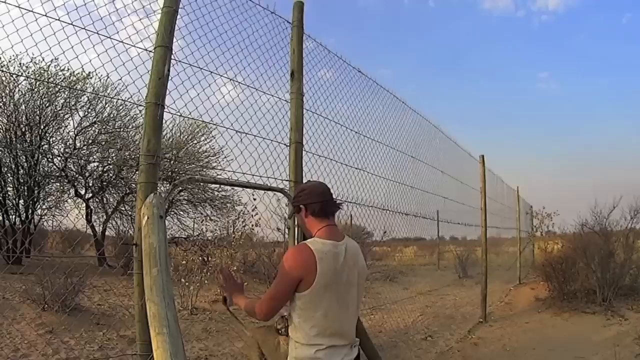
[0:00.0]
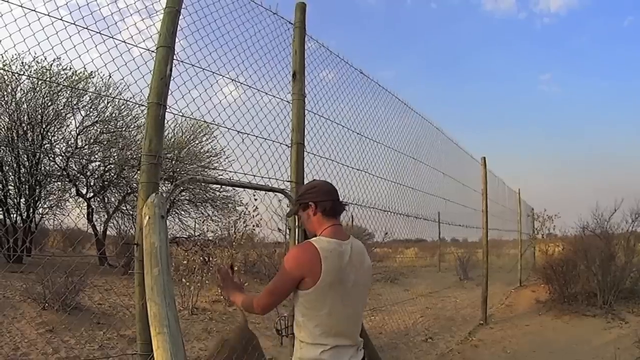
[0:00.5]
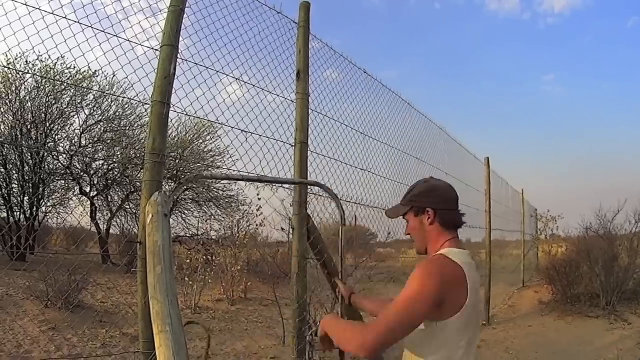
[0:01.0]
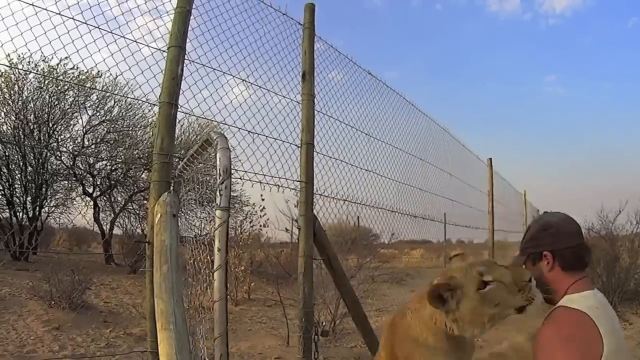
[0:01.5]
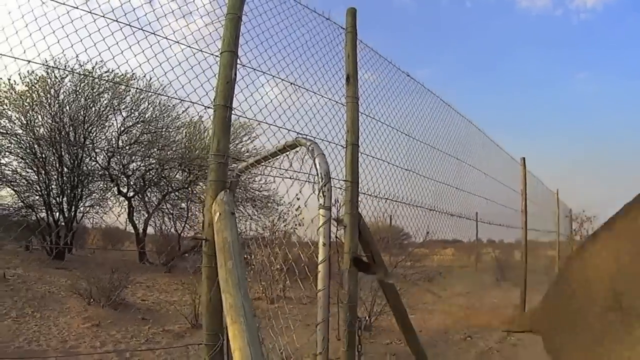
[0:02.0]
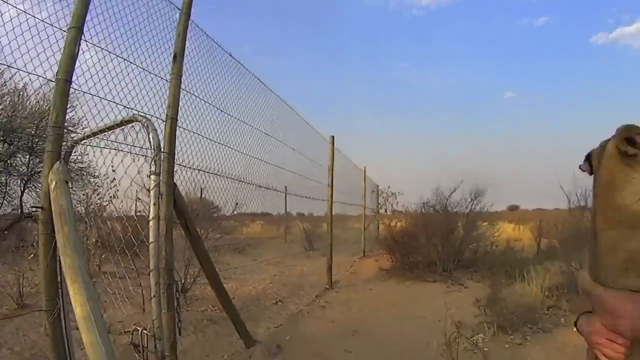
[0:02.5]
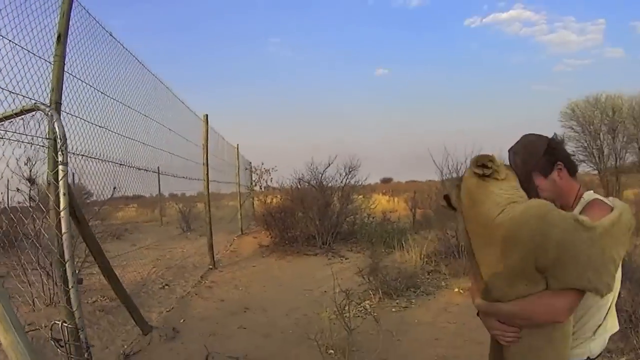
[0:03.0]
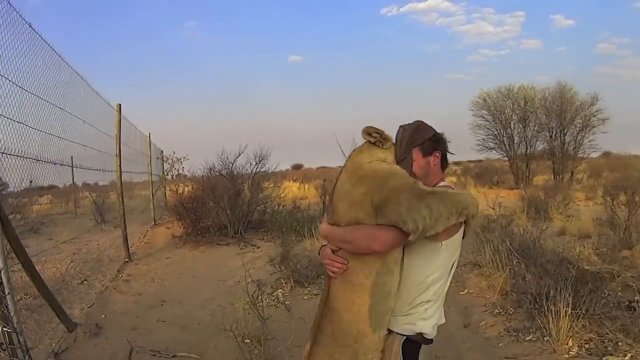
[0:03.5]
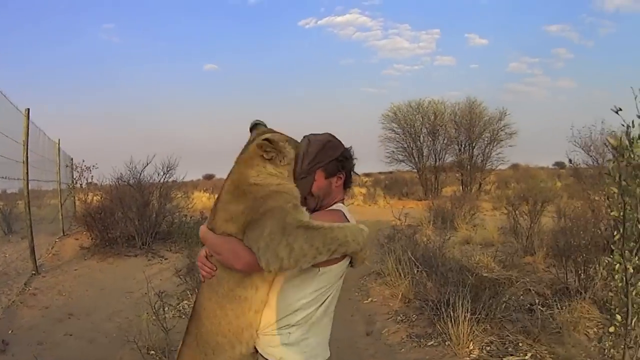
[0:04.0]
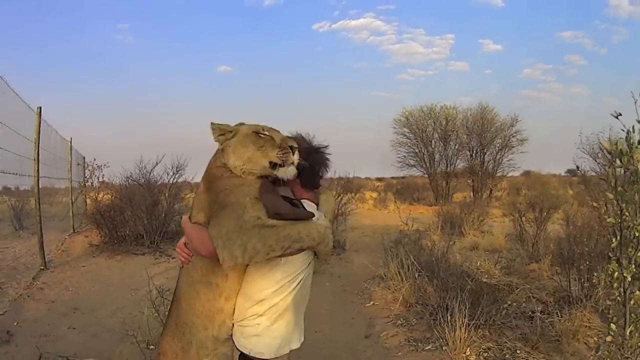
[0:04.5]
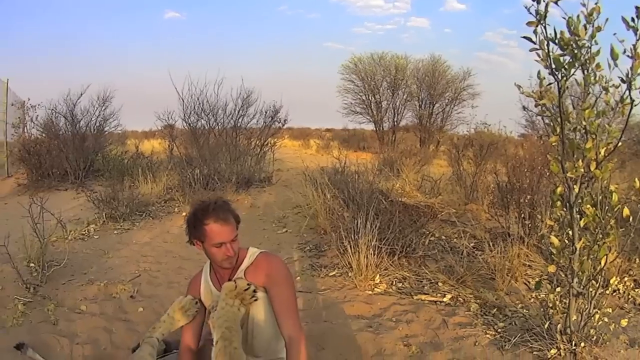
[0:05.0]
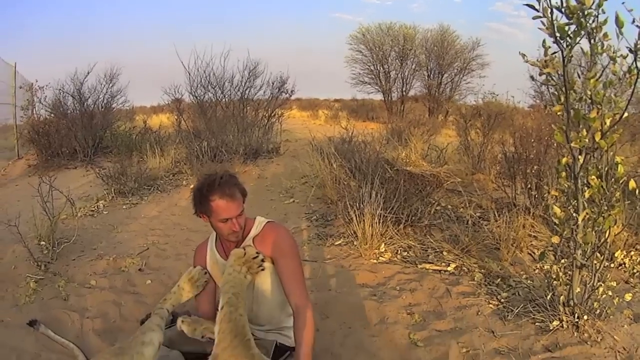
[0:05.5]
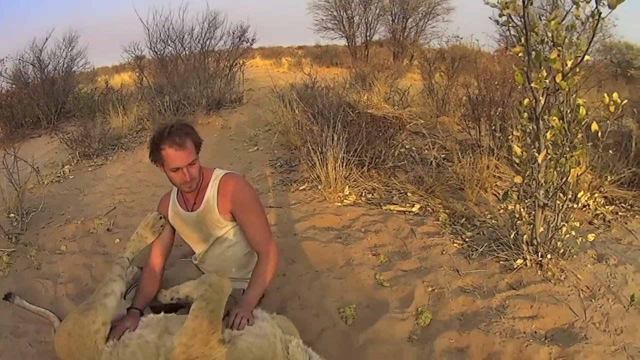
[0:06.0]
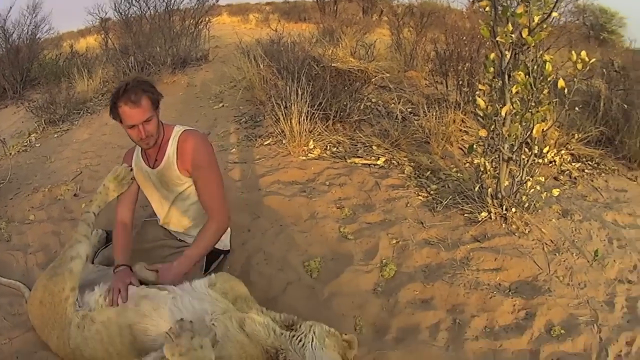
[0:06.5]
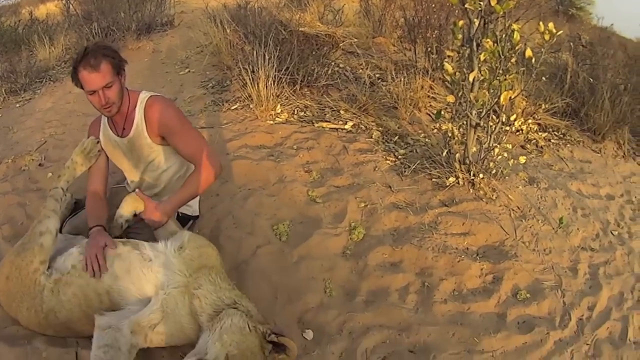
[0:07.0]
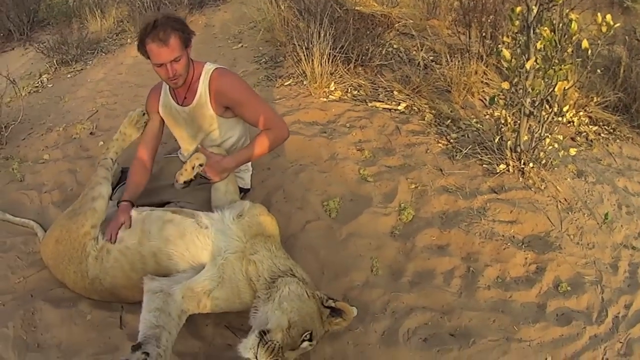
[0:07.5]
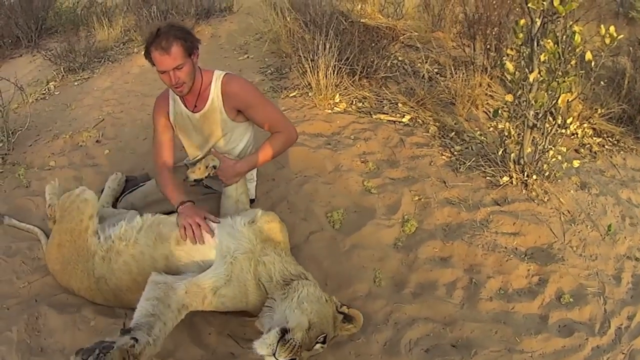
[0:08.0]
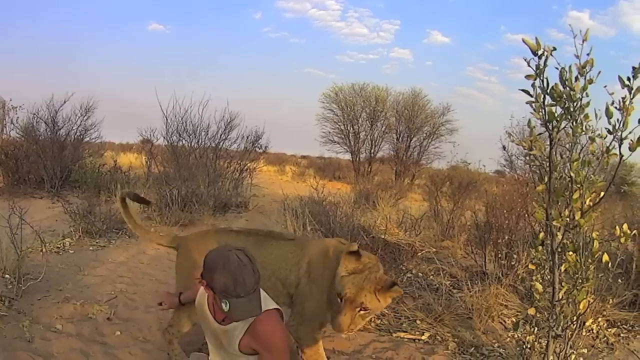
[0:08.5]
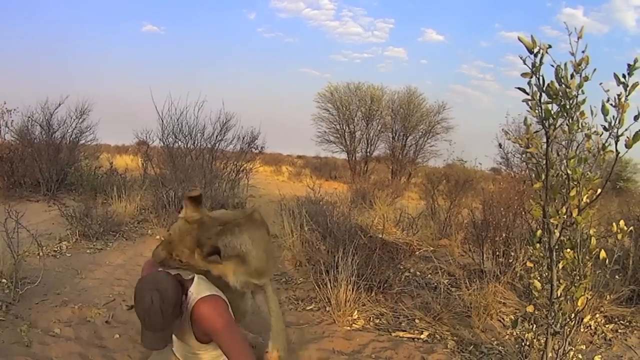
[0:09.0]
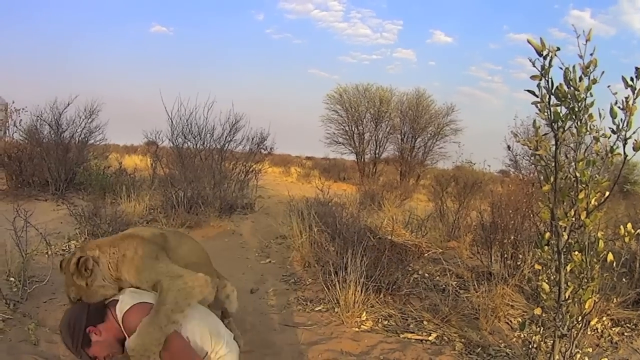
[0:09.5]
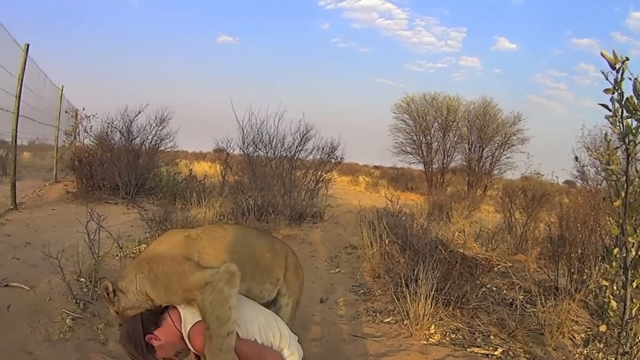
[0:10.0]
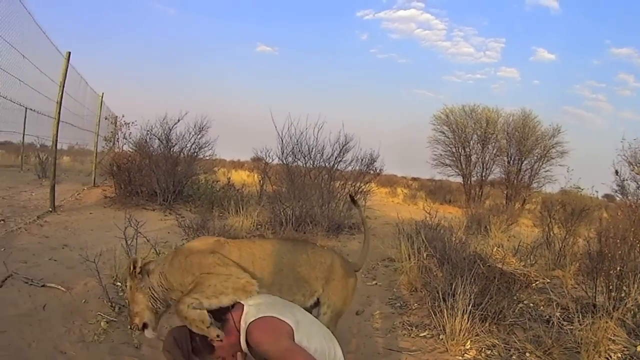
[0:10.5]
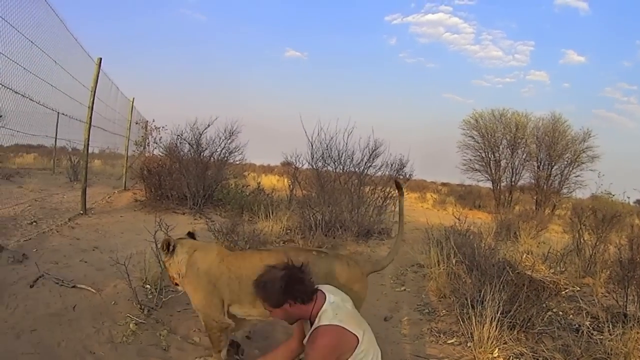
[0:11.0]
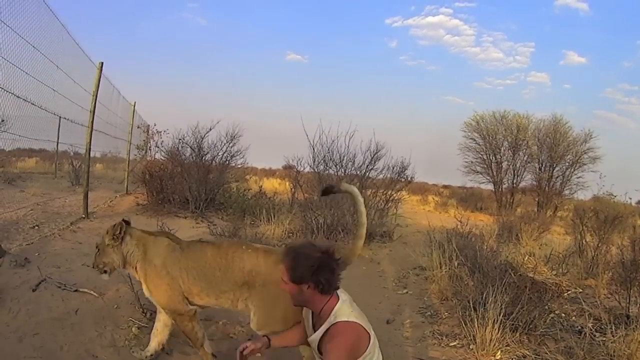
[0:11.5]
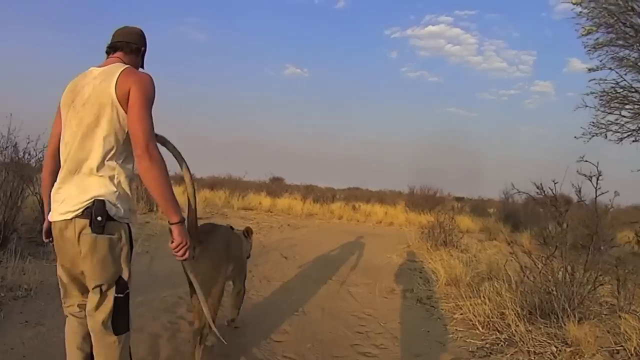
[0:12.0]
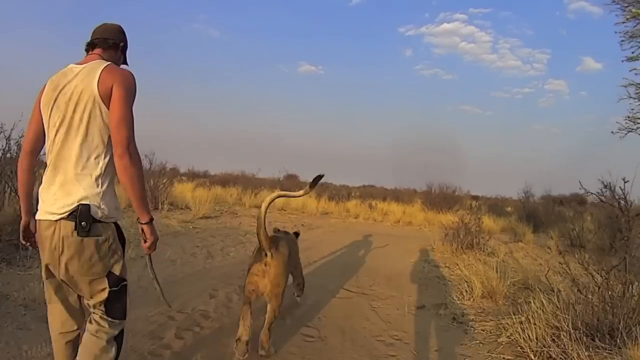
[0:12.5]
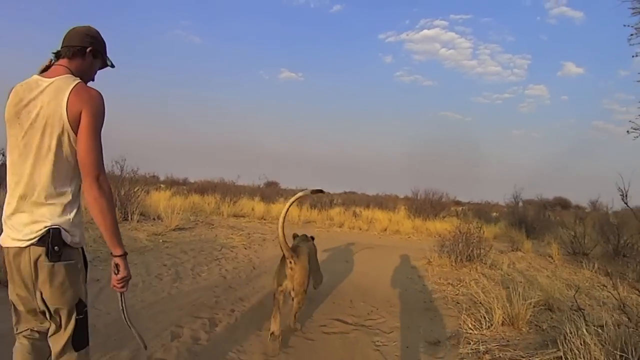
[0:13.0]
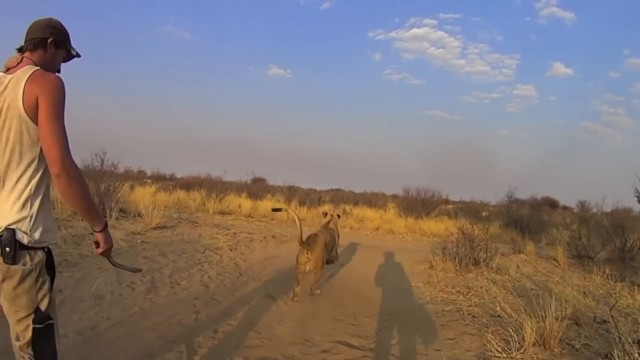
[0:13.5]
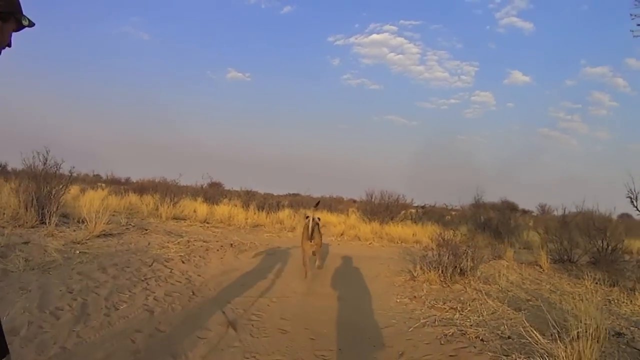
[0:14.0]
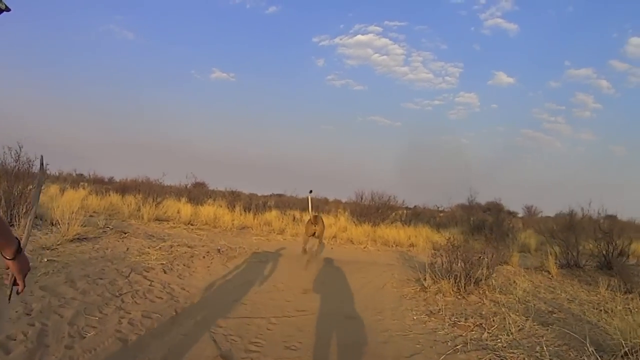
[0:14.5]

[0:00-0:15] A Caucasian man wearing a white tank top and khaki pants is in what appears to be a desert, where it is very sandy. When he opens a fence, a lion comes out and hugs him. They seem to be friends who know each other, and the man is not scared of the lion at all. In the end the man walks away with the lion, following it. It is daytime, with blue skies, white clouds, and small trees in the distance.